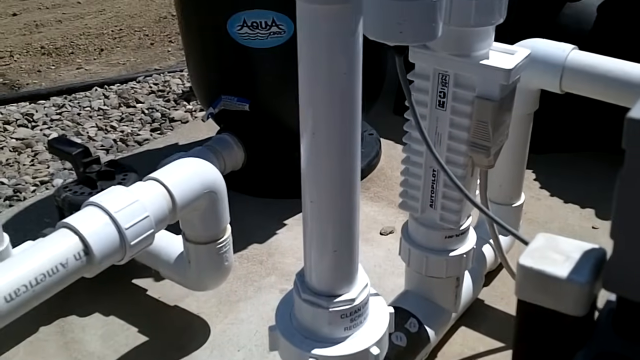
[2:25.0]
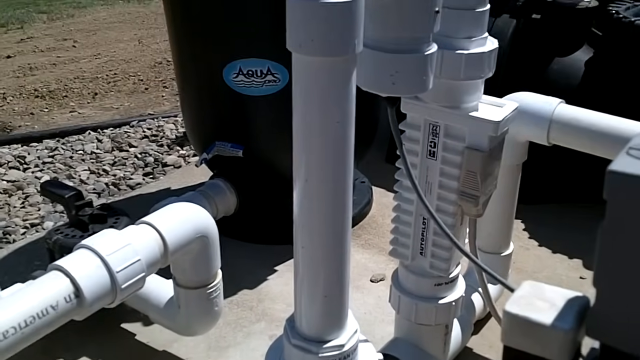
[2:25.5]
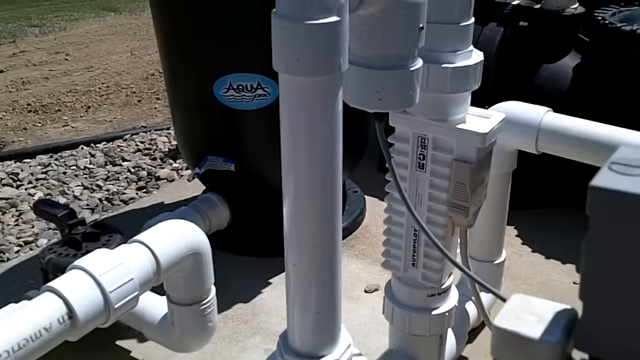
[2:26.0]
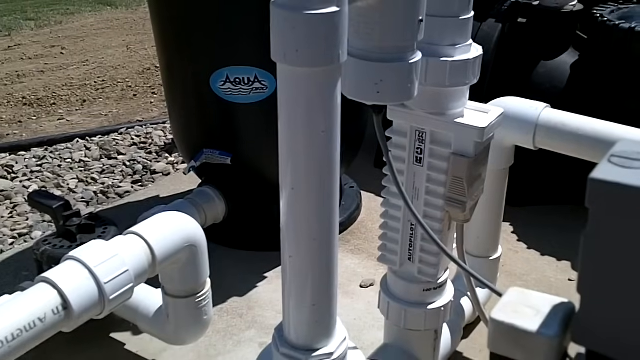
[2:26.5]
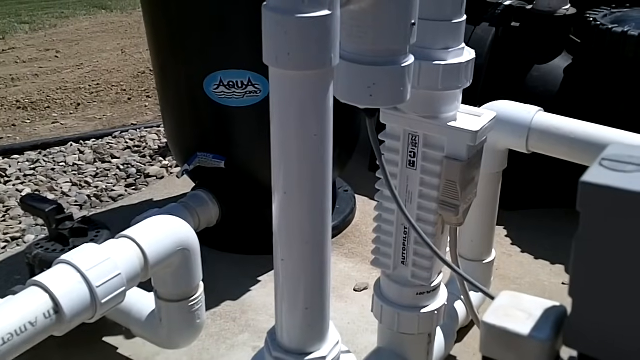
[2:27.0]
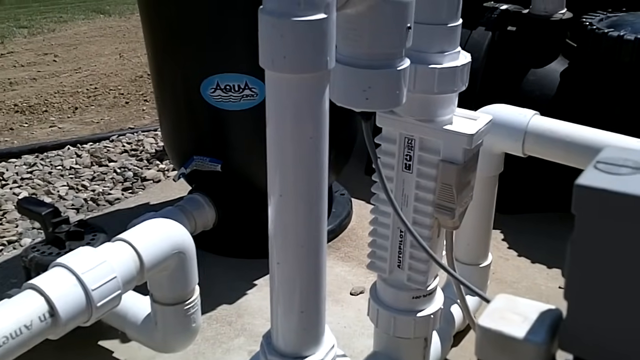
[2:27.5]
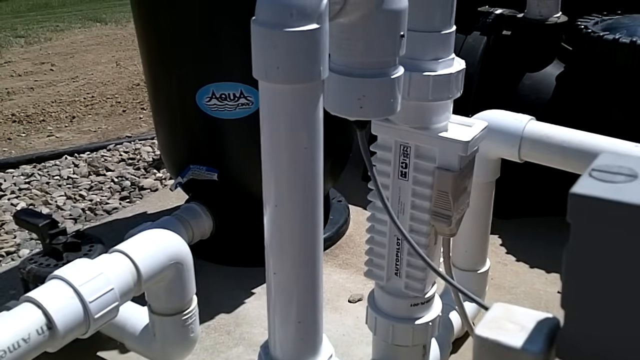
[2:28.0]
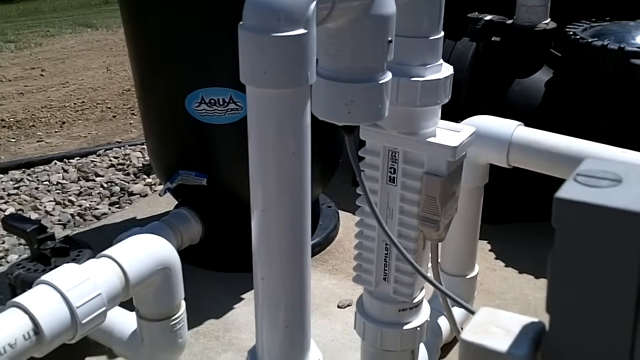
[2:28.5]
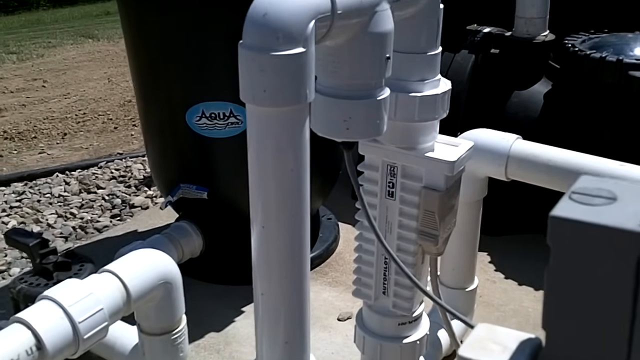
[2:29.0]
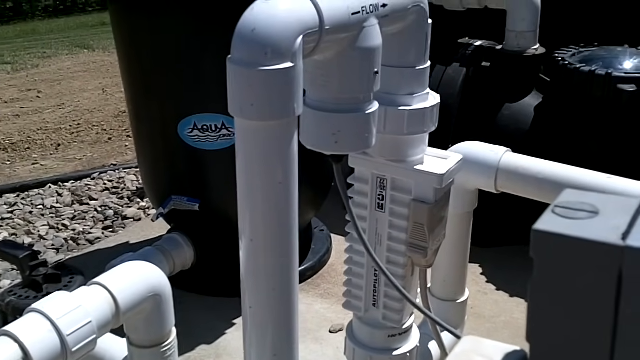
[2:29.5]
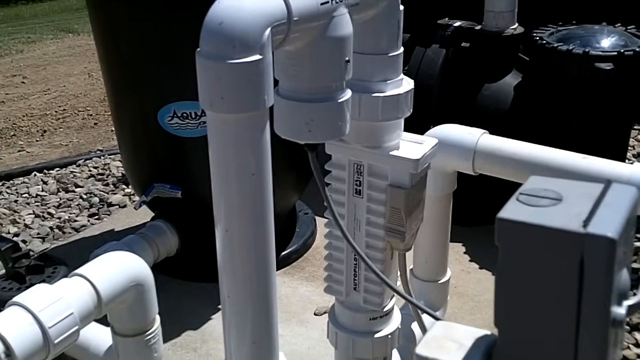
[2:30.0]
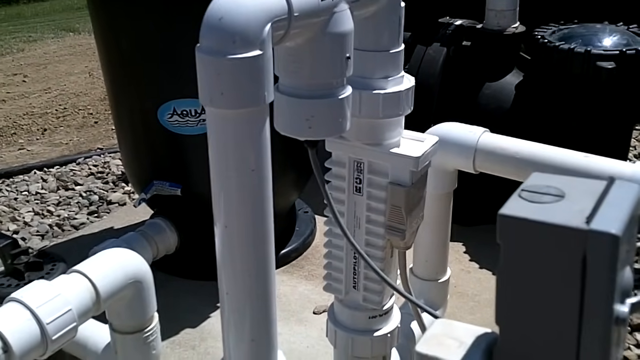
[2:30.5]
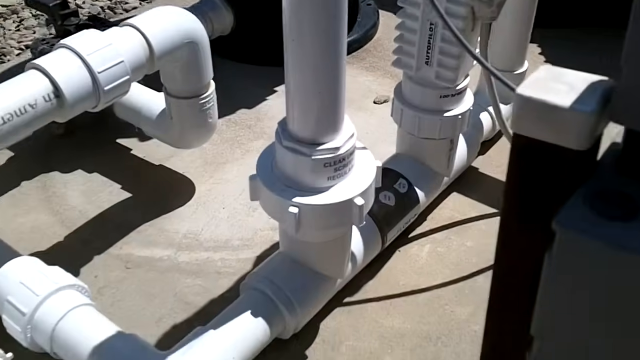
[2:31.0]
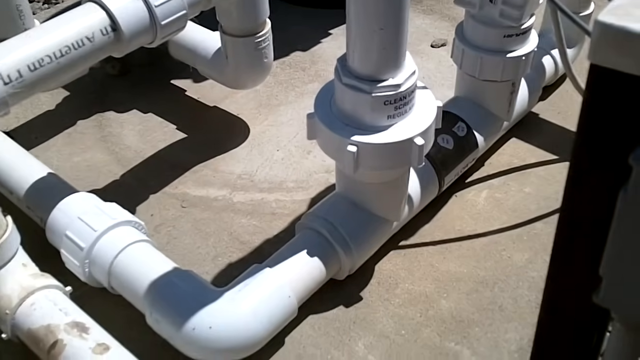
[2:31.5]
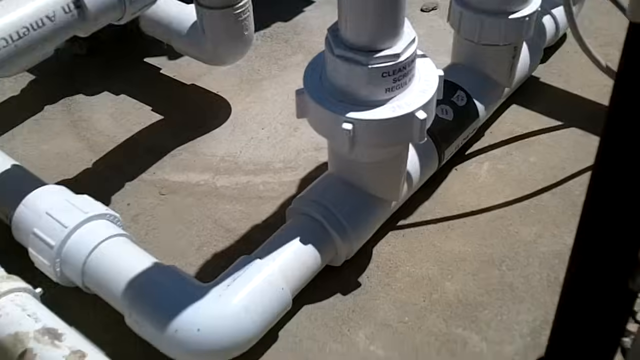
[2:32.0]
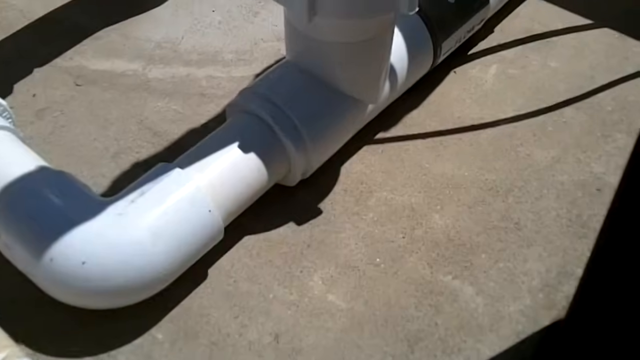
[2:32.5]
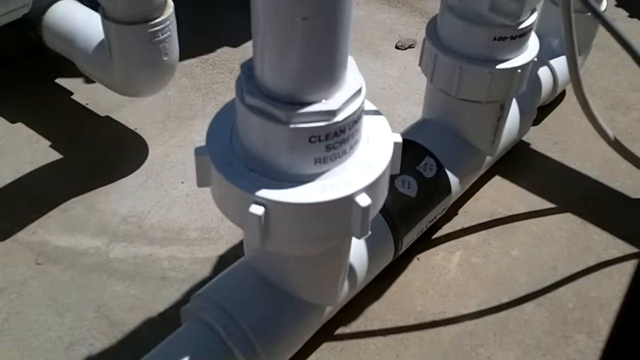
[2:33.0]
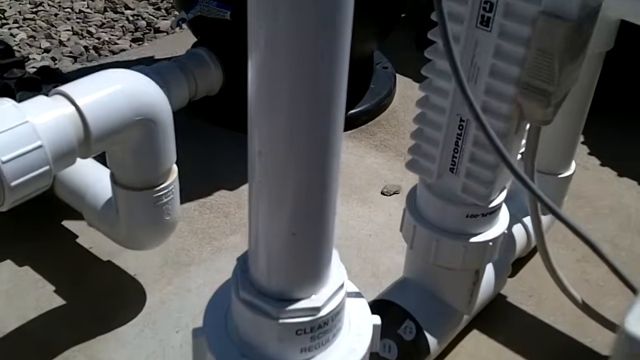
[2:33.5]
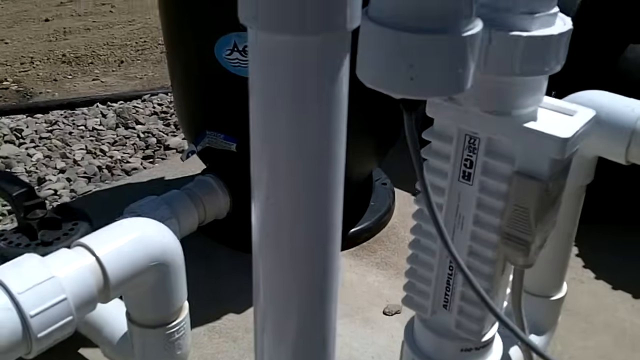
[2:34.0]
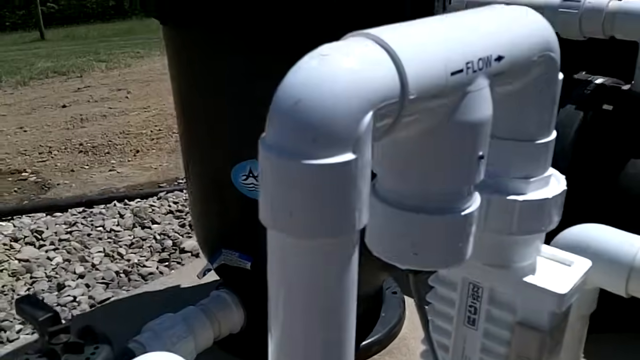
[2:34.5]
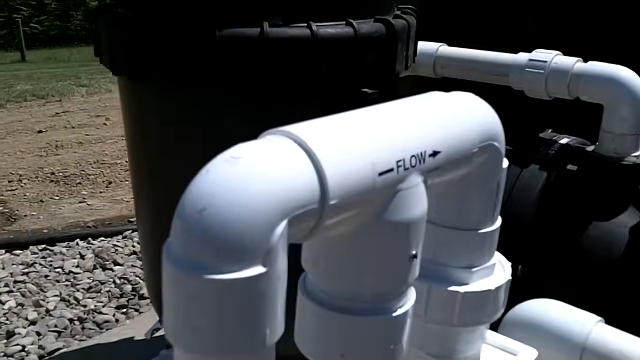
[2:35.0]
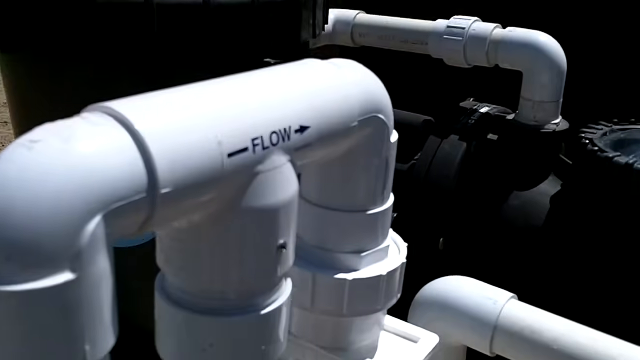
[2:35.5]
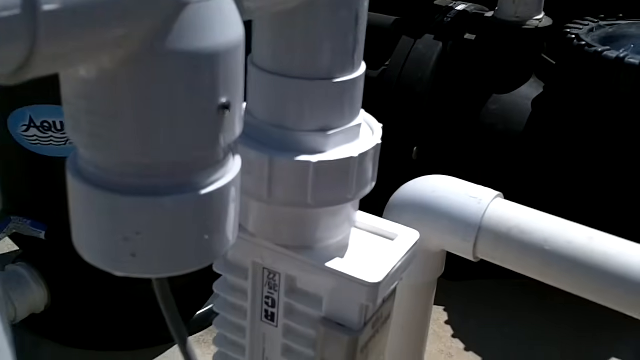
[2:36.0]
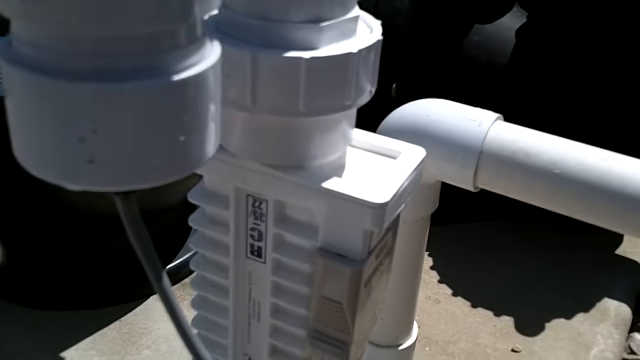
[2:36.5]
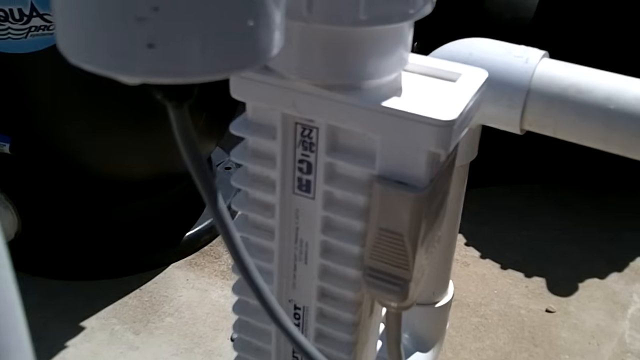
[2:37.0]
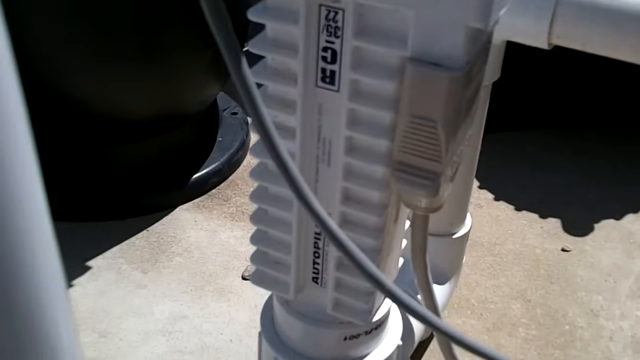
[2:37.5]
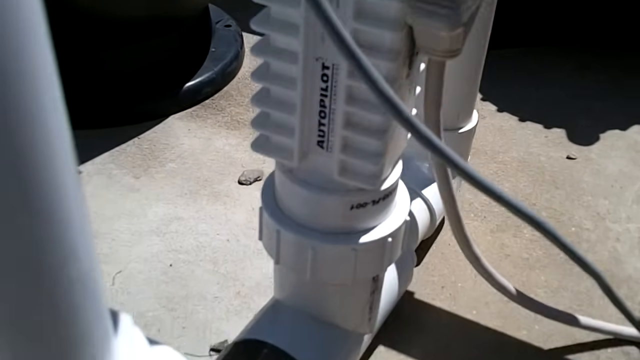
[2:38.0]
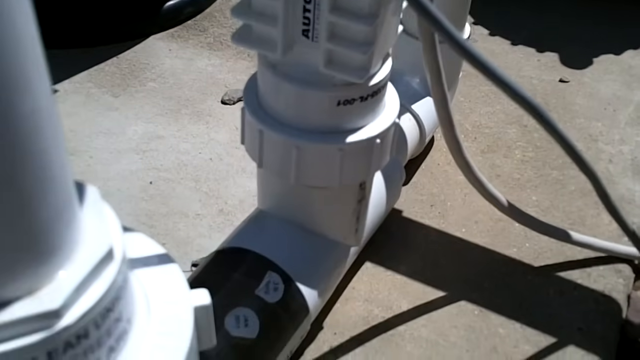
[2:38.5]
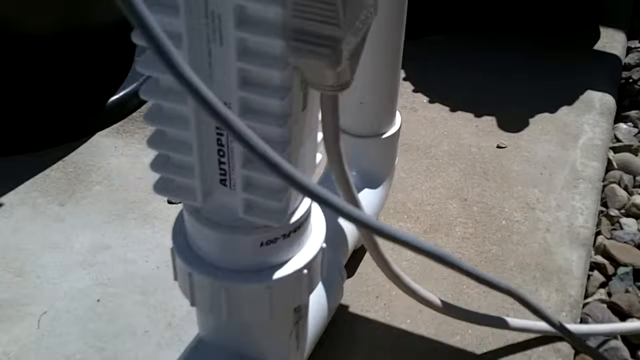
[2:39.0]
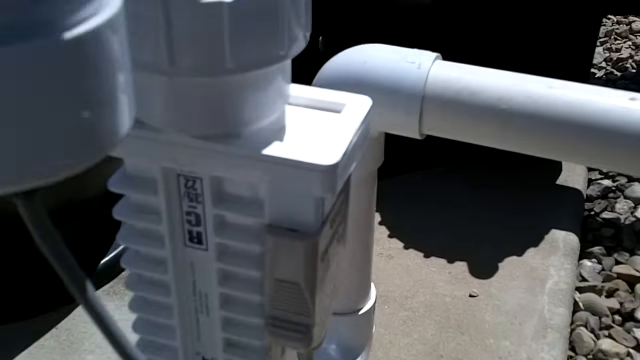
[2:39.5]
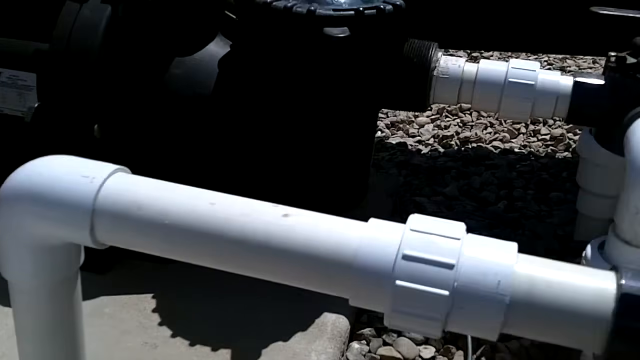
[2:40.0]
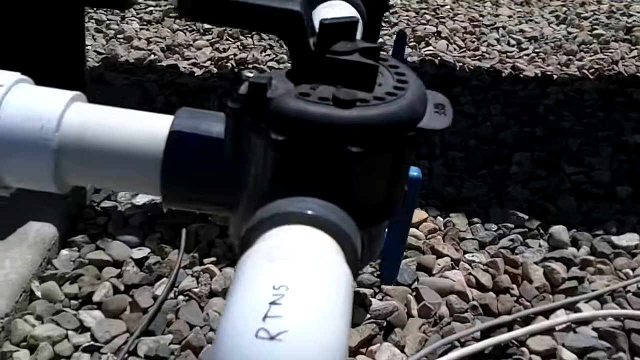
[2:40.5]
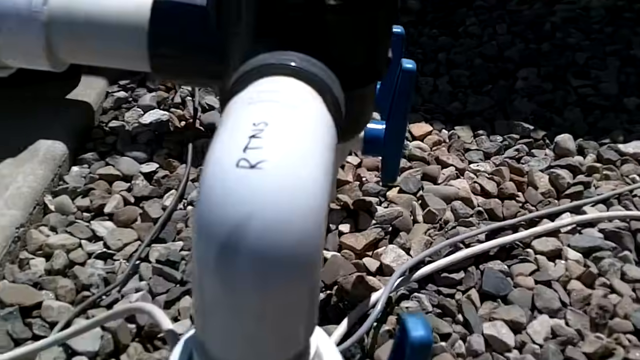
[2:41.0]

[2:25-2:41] The view shows the middle part of the apparatus: white tubing and gray tubing on top of the cement. The word "flow" is written on the tubing with a direction arrow pointing to the right. The camera zooms in on one of the tubes that has the black lever on top, and a smaller gray box is to the right. Other fine print on some of the tubing is hard to make out. Connector hoses connect into the tubing and run elsewhere on the ground, over the rocks and over the cement. The focus returns to the area that says "flow", which seems to indicate the direction of flow of whatever goes through the tubes, most likely water; this looks like pool equipment.